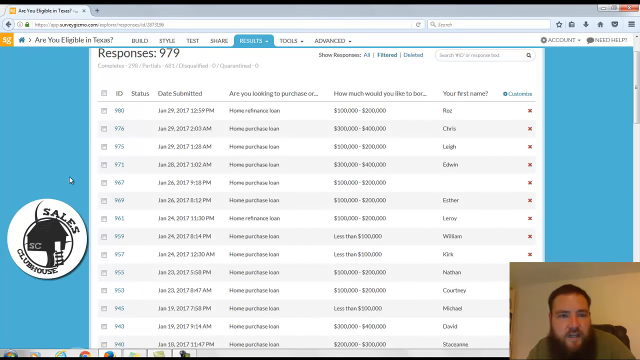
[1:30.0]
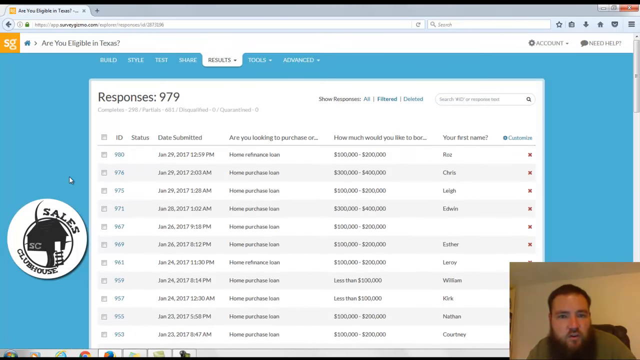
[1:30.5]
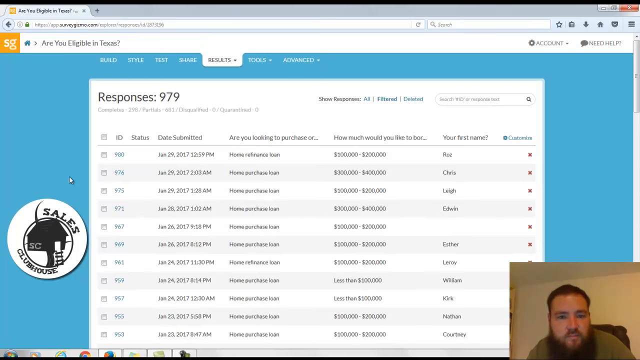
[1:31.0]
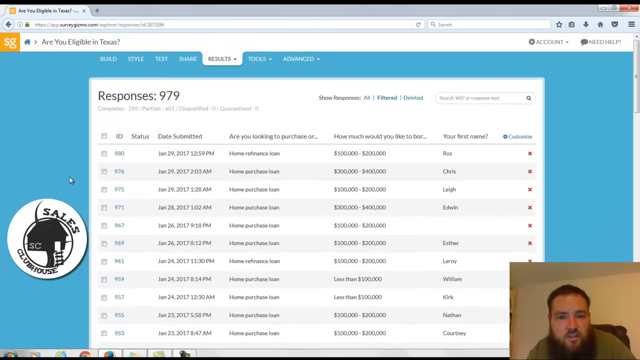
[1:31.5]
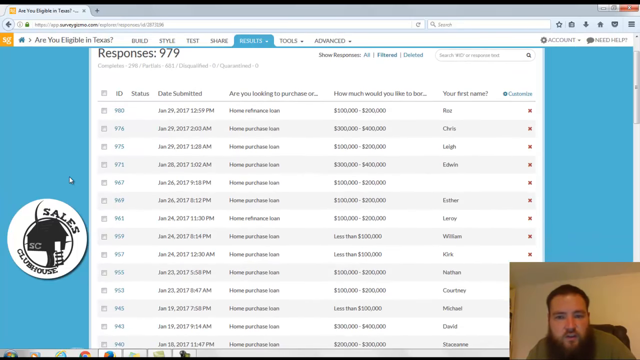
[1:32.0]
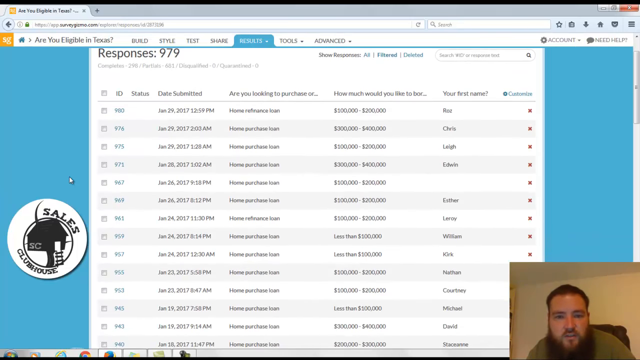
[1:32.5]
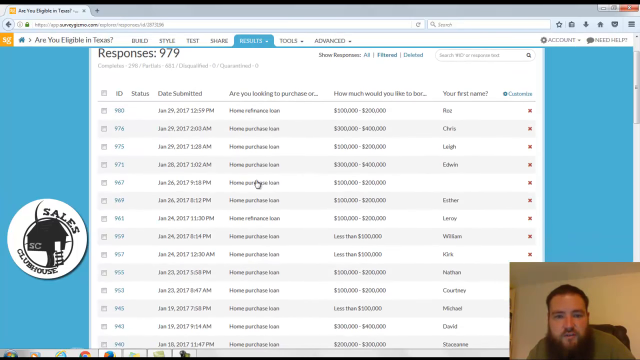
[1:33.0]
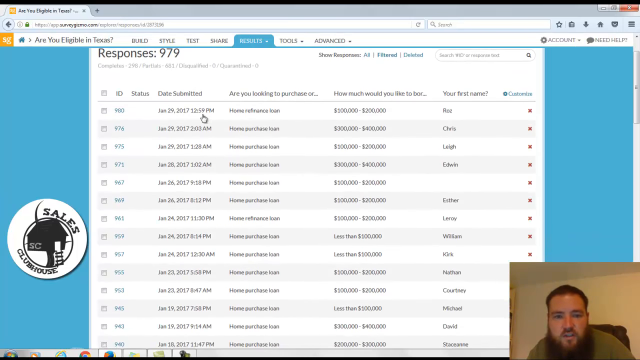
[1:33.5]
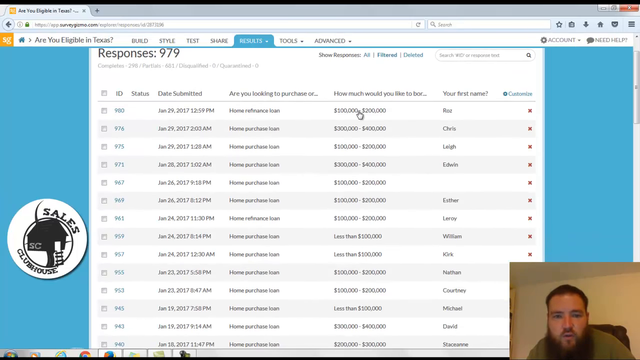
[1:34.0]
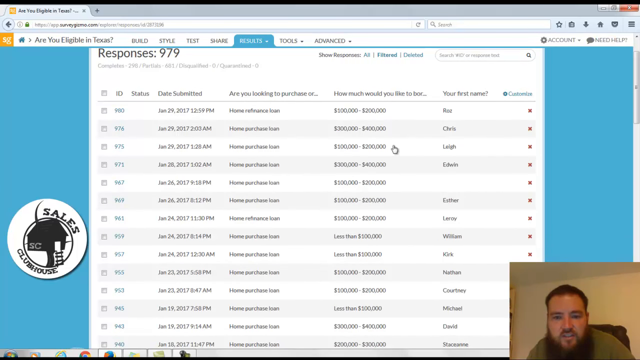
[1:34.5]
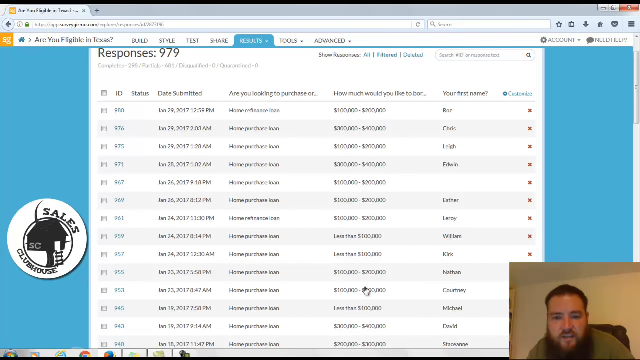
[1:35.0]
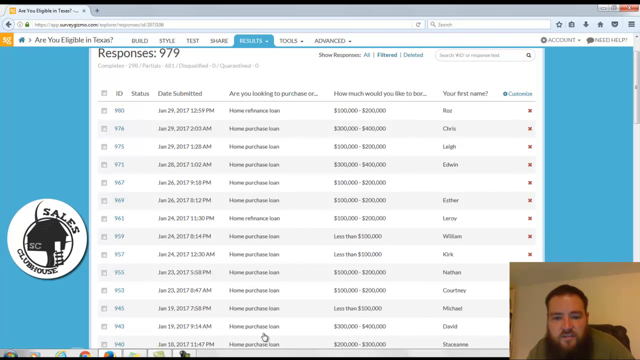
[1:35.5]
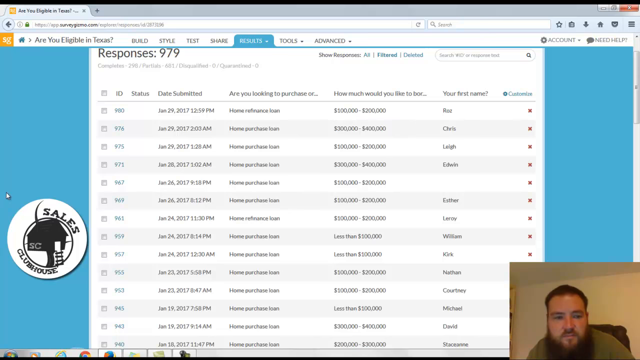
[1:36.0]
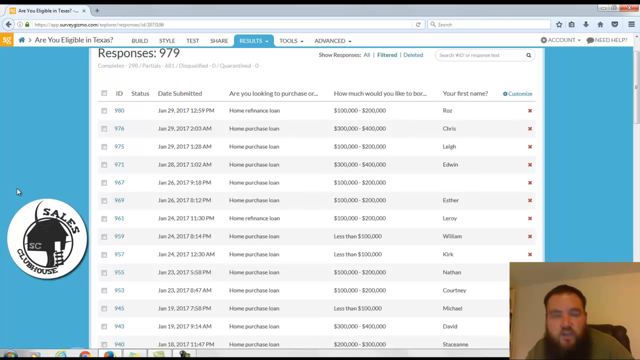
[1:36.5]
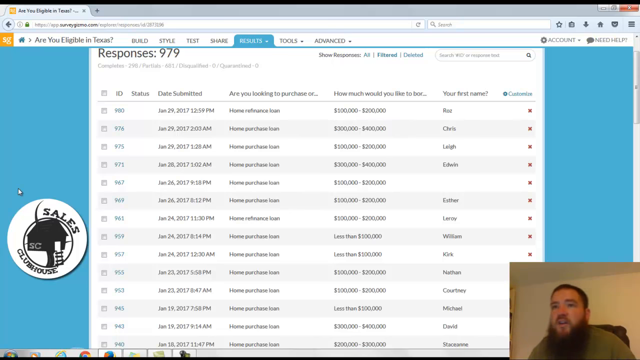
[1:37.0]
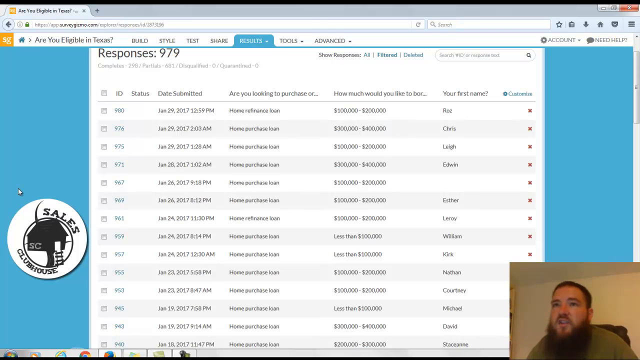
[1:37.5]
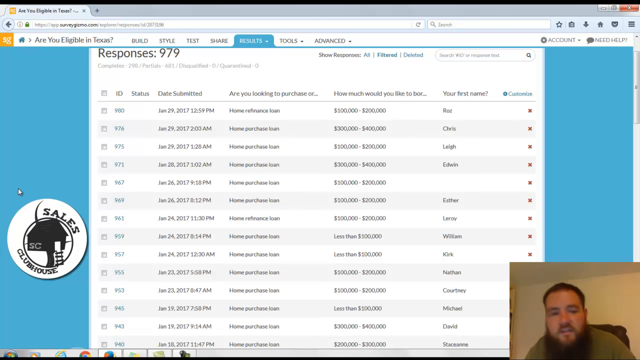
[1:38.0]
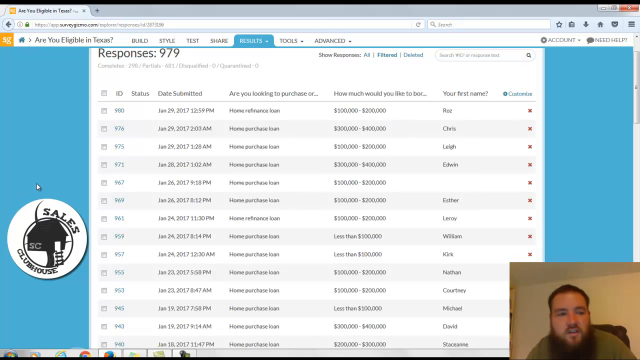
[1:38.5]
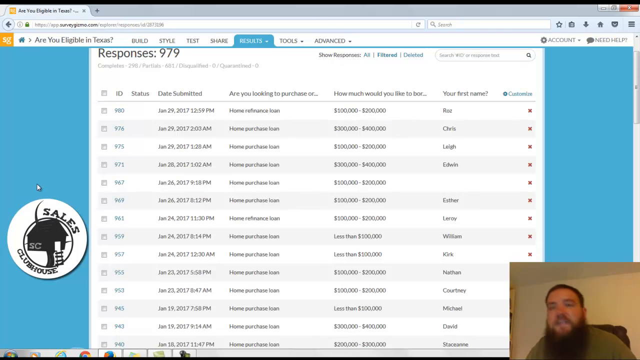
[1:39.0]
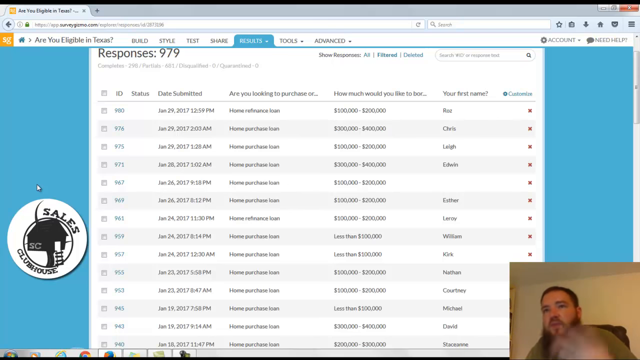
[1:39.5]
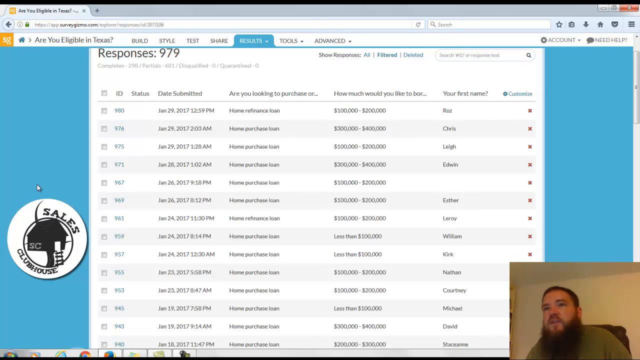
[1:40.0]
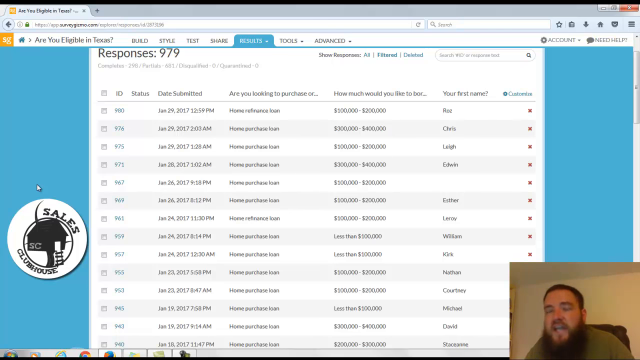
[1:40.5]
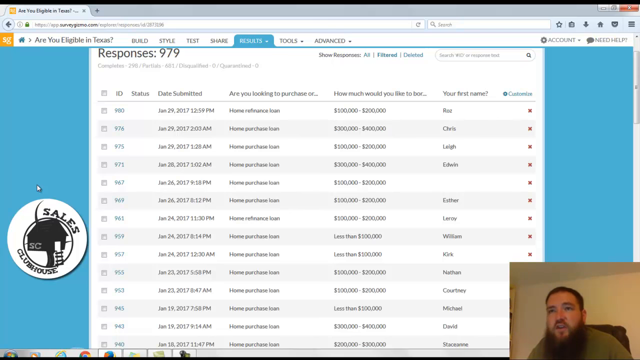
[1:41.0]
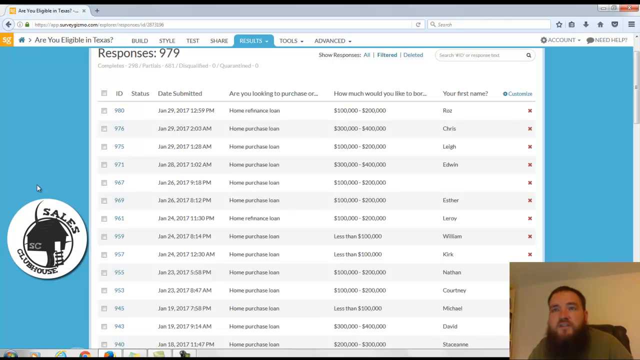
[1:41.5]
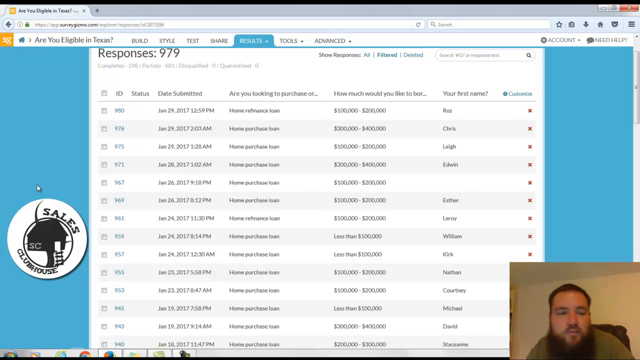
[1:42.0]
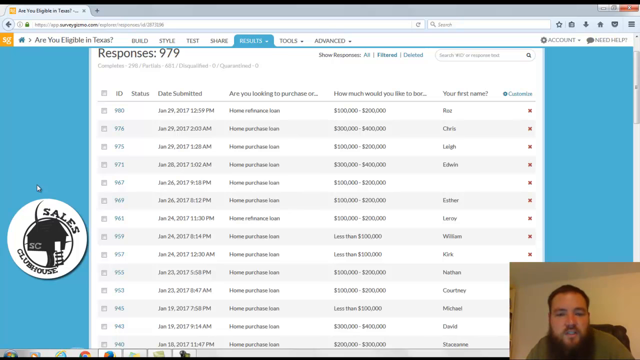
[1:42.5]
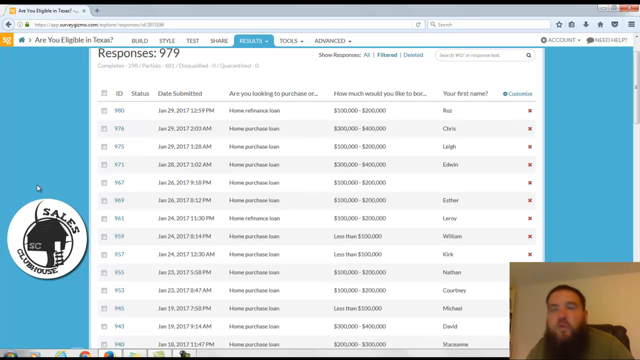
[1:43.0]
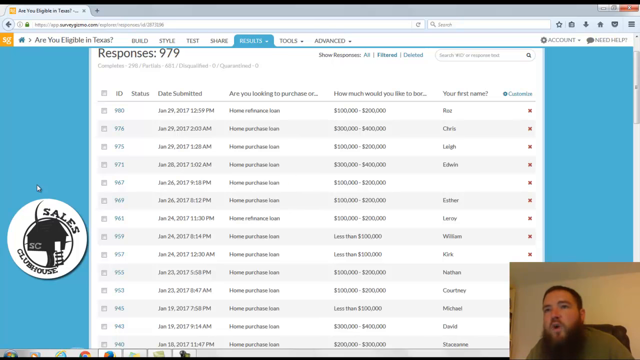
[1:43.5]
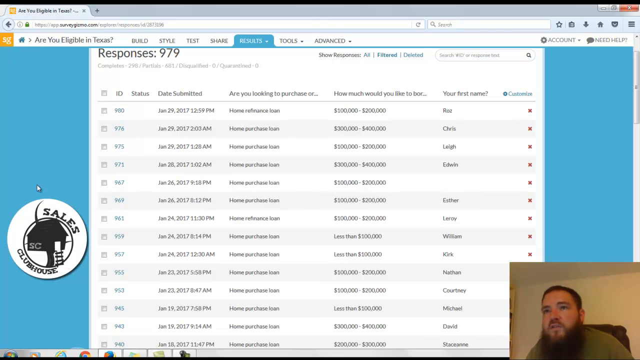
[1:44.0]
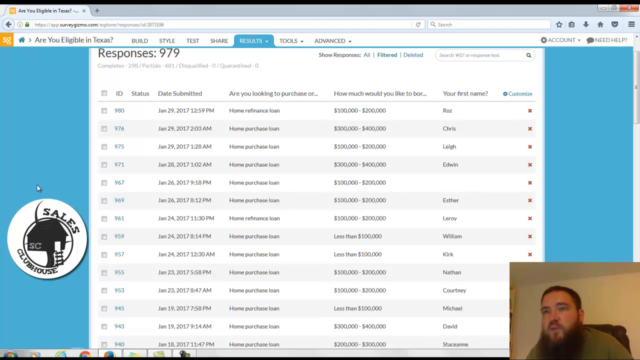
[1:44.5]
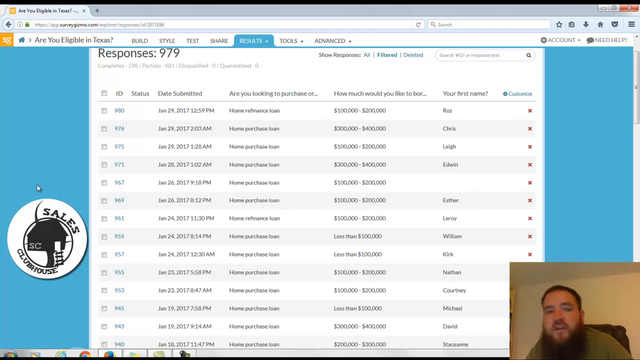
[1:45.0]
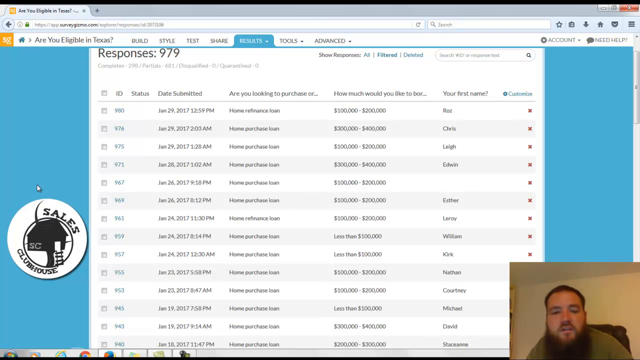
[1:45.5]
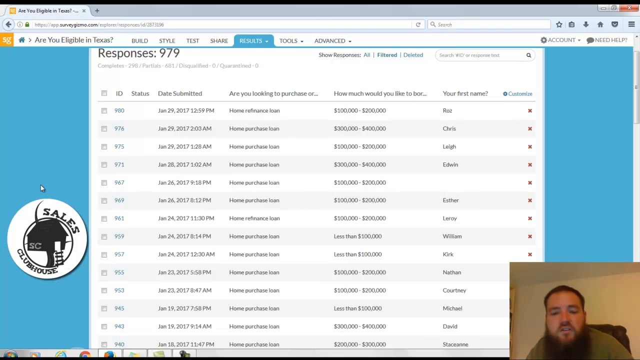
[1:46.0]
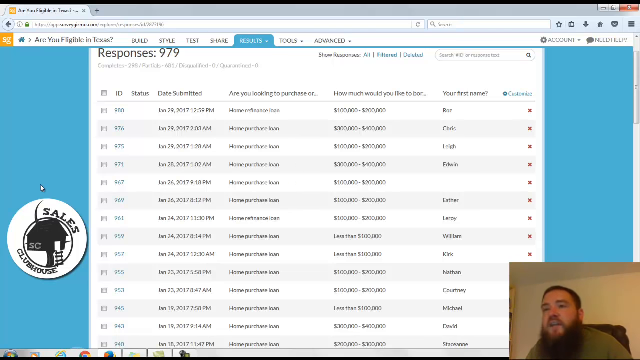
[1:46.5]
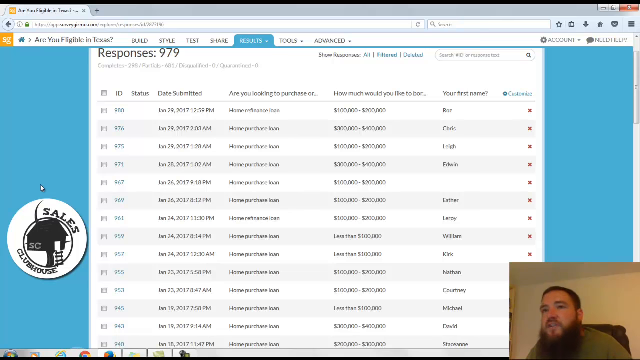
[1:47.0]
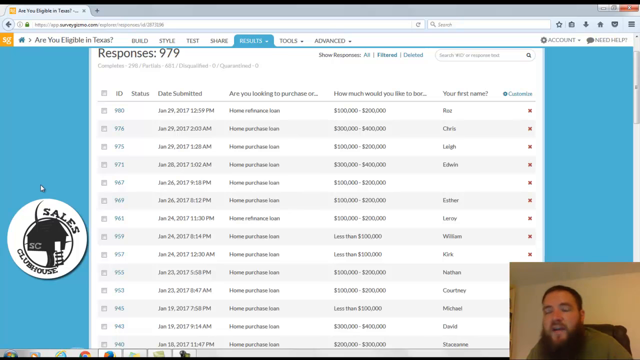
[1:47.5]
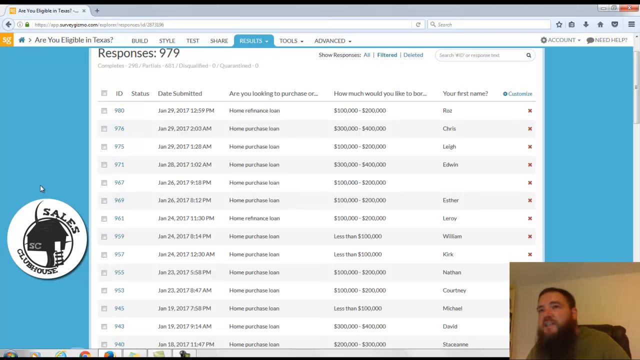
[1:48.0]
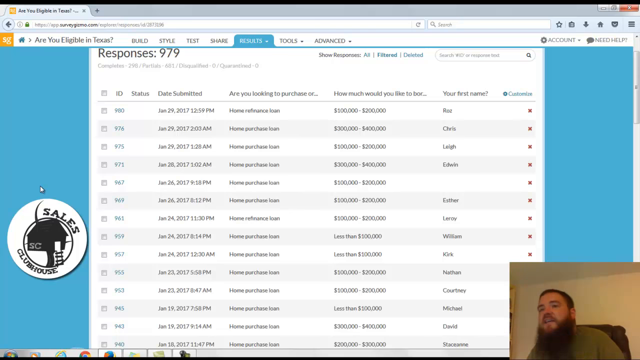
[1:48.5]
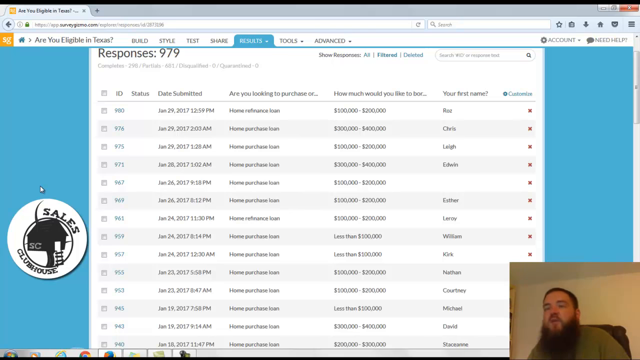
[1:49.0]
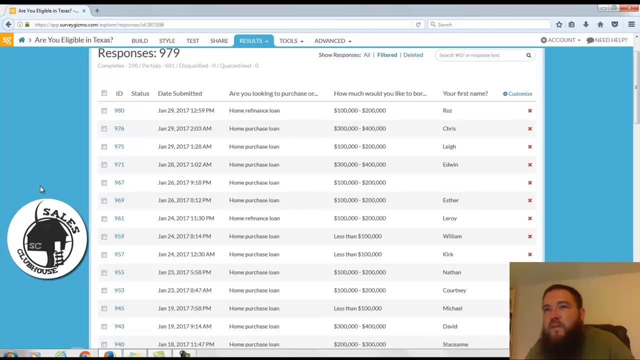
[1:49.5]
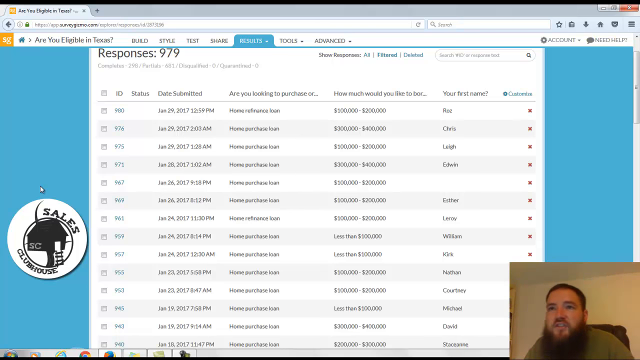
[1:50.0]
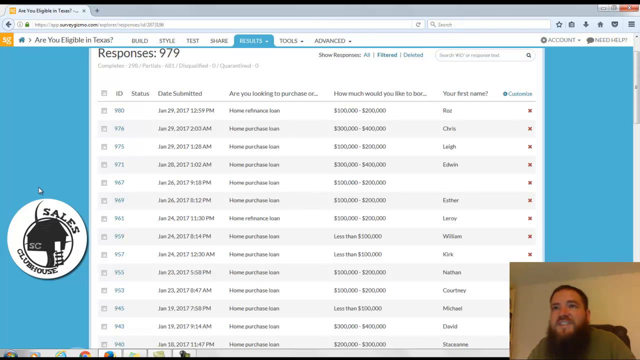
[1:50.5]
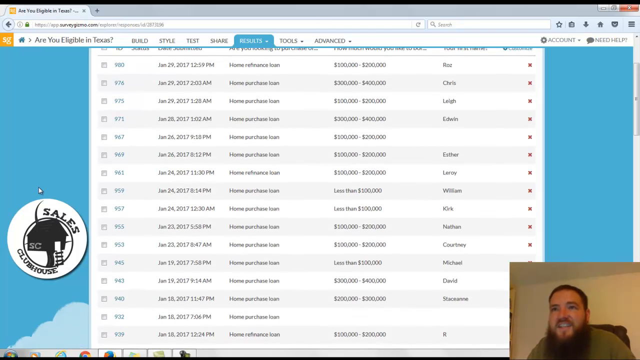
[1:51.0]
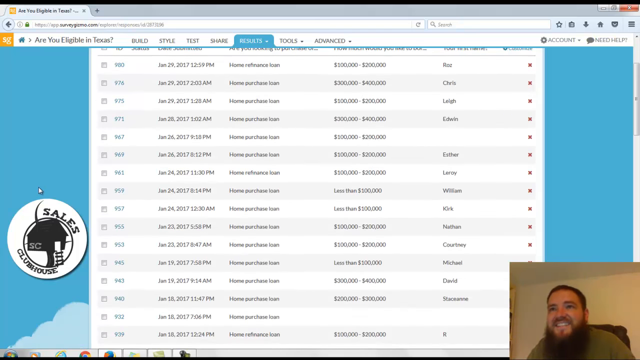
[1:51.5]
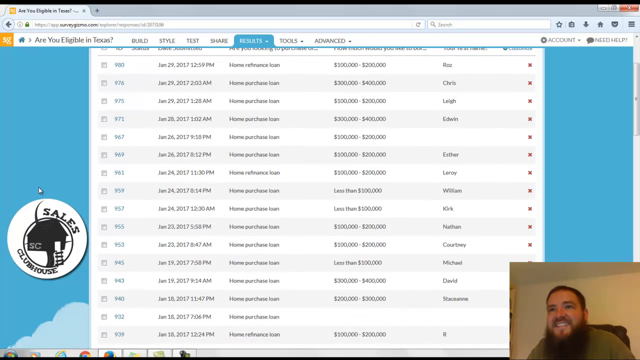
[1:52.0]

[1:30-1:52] A young white man is in a square at the bottom right of the frame in what looks like a streamer overlay. He appears to have short black hair and a very thick beard, wears a pale green shirt and sits on a black computer chair. He seems to be looking down at his computer screen and talks the whole time. Above him is a website: at the top left is an orange square with the white text "SG", with "are you eligible in Texas" to its right. Below is a white table reading "responses 979", with five main headers: "ID", "date submitted", "are you looking to purchase or...", "how much would you like to borrow..." and "your first name". He scrolls up on the website, then down, and his white mouse cursor moves to the how much would you like to borrow column and goes down a bit. He keeps talking toward the screen, looks toward the left and upward a bit, and waves his left hand a little while talking. With the cursor still, he scrolls down a little, and he smiles as the video ends.